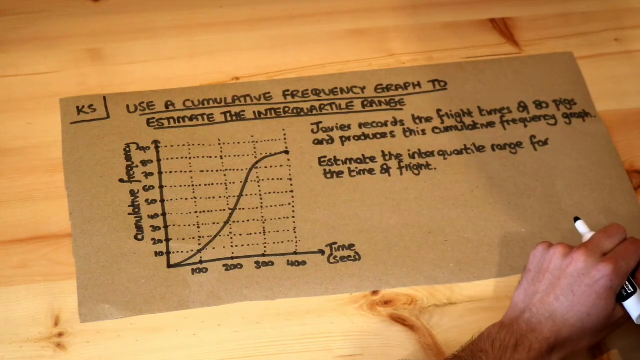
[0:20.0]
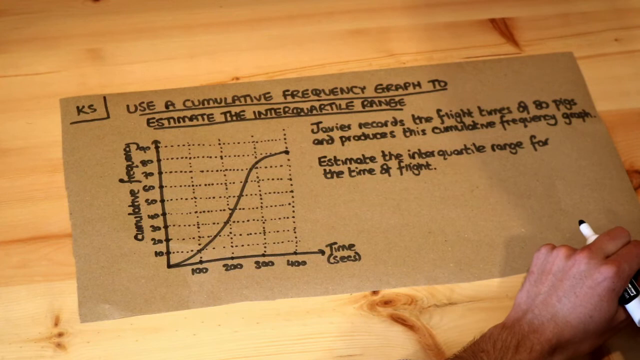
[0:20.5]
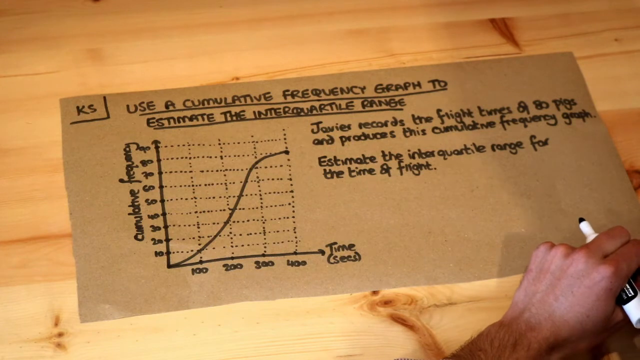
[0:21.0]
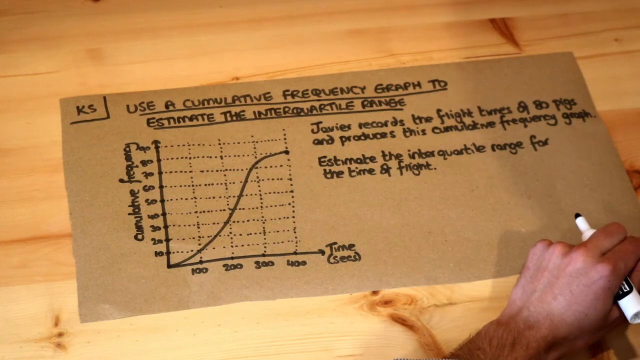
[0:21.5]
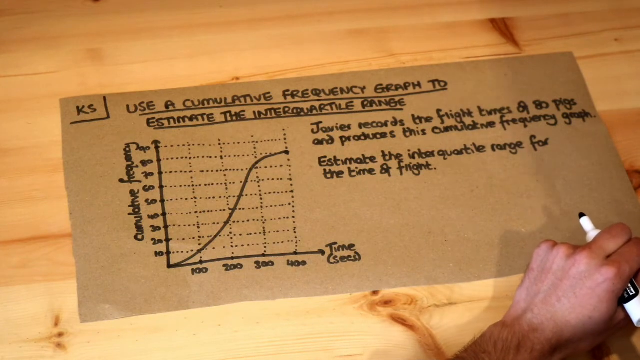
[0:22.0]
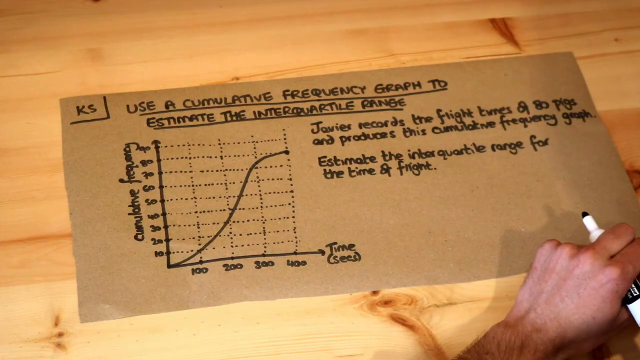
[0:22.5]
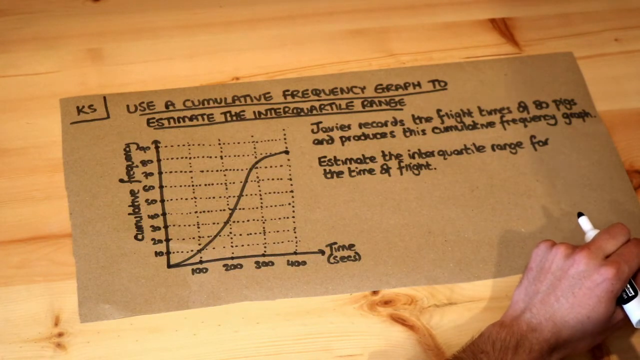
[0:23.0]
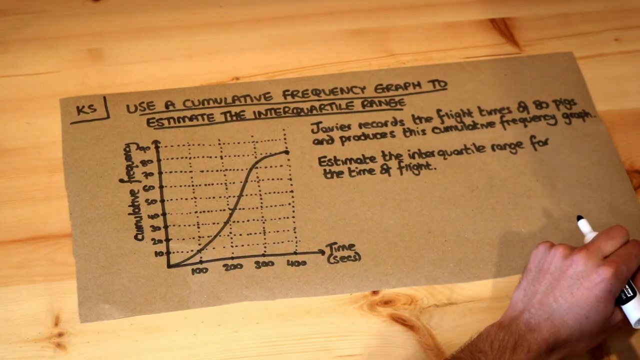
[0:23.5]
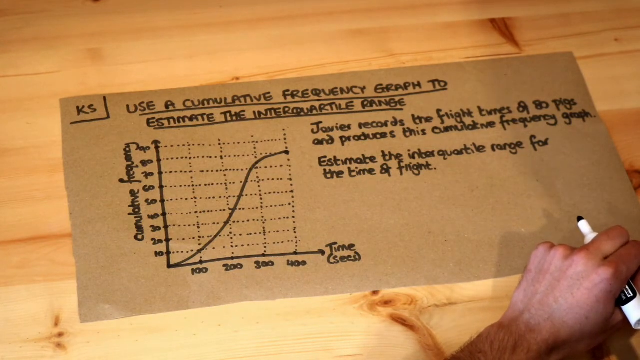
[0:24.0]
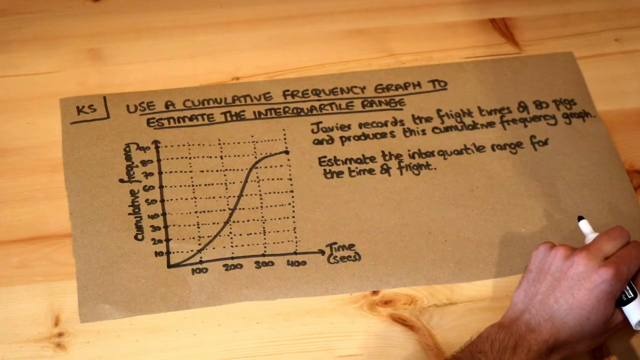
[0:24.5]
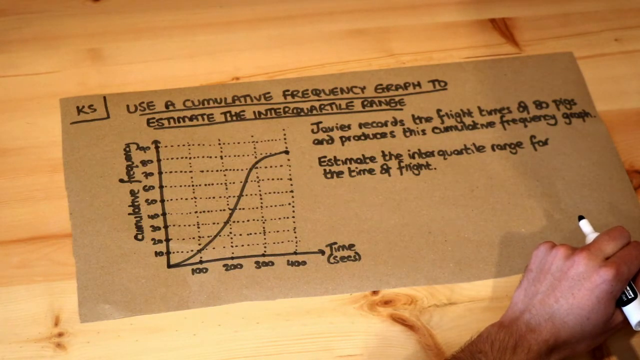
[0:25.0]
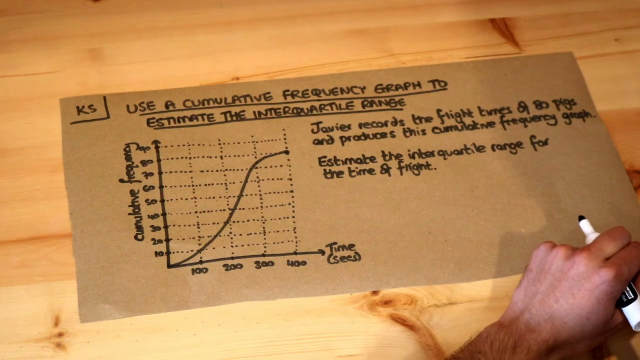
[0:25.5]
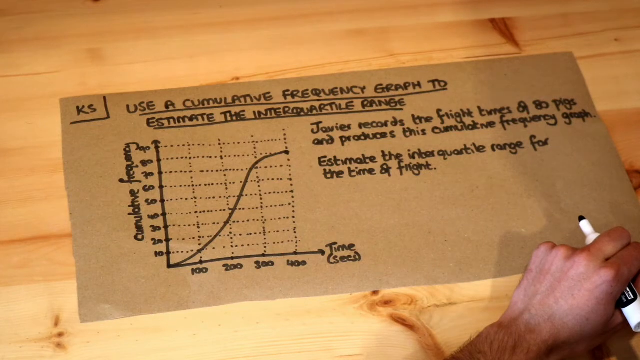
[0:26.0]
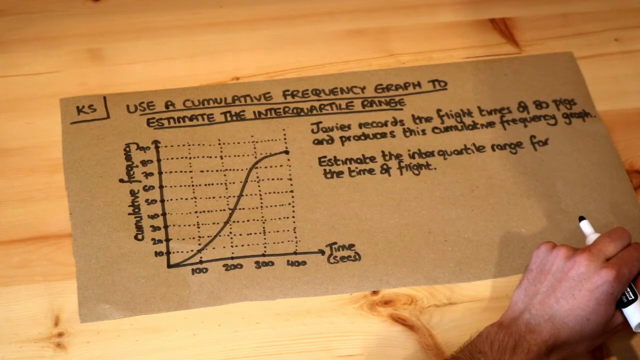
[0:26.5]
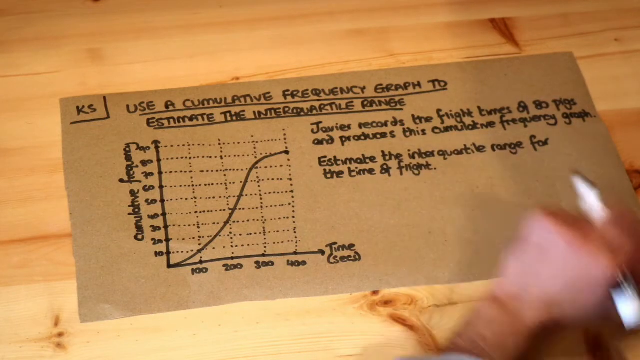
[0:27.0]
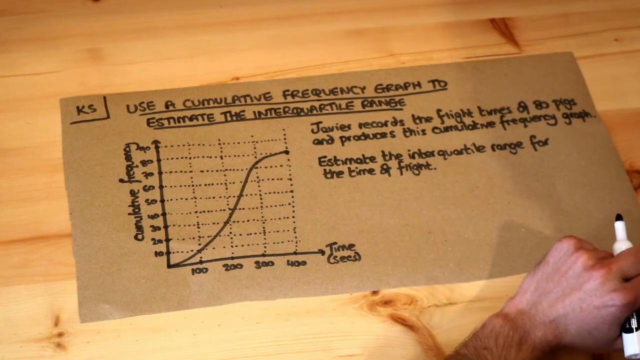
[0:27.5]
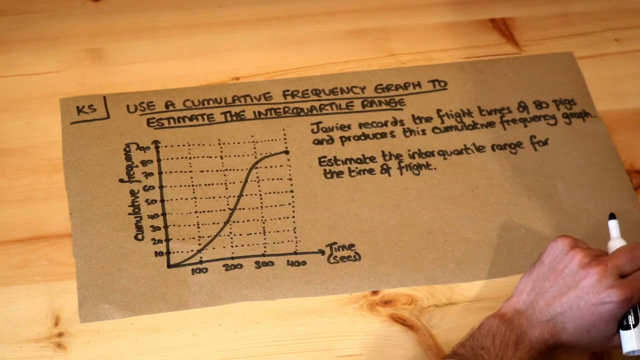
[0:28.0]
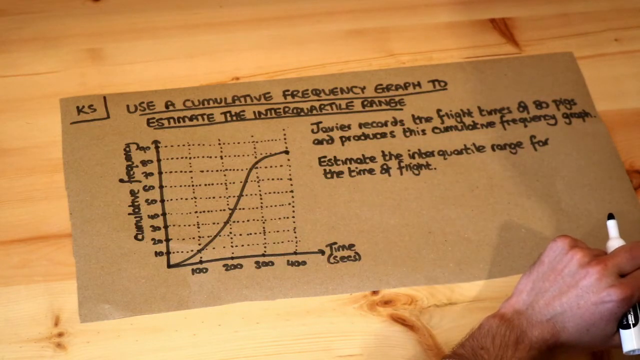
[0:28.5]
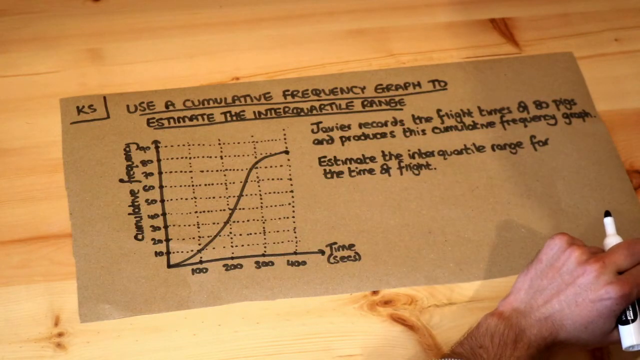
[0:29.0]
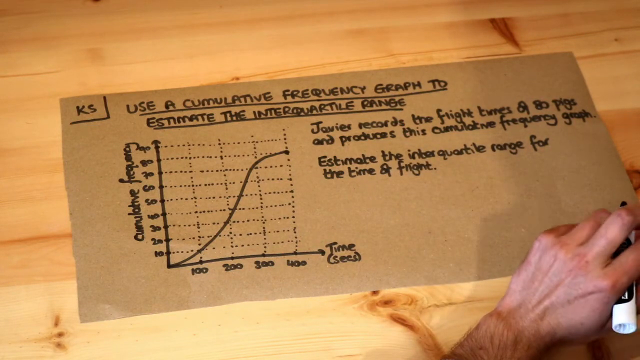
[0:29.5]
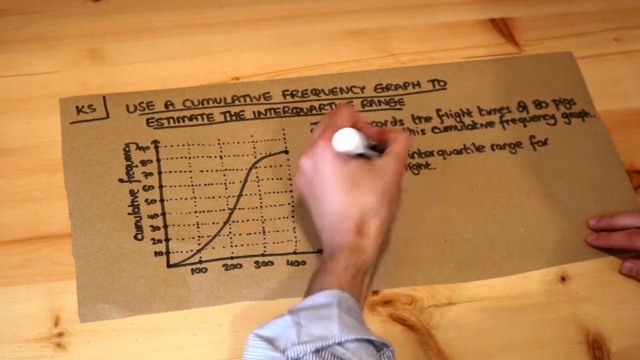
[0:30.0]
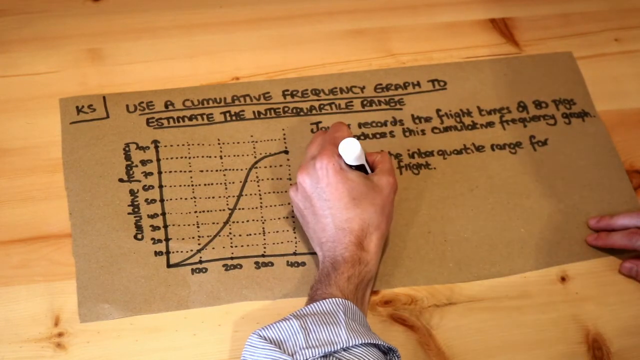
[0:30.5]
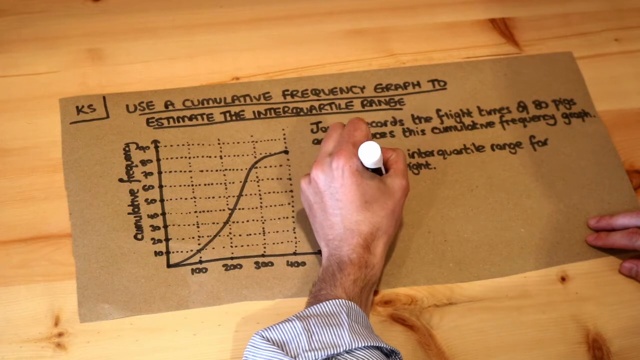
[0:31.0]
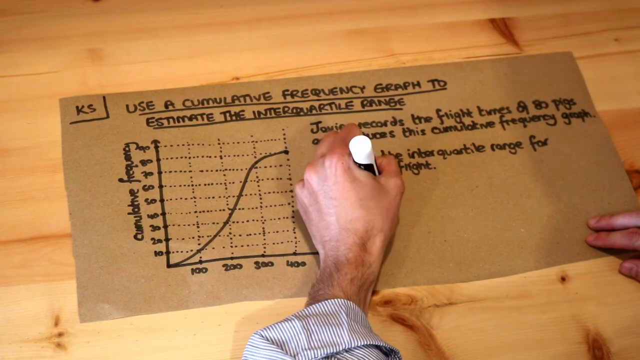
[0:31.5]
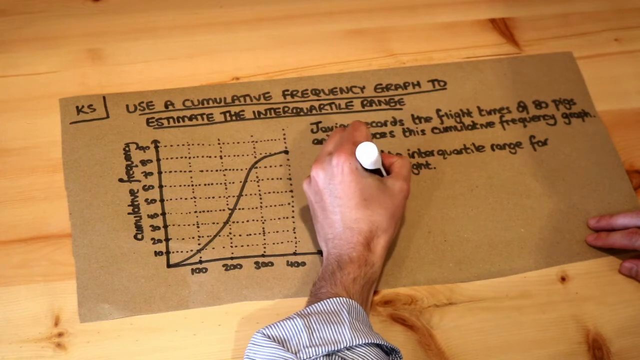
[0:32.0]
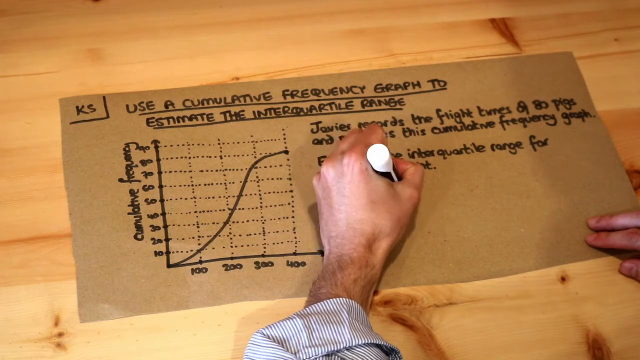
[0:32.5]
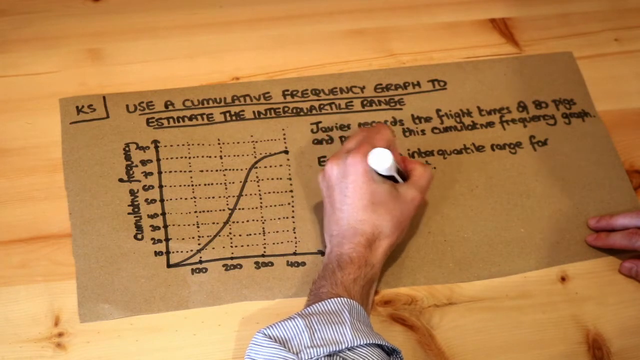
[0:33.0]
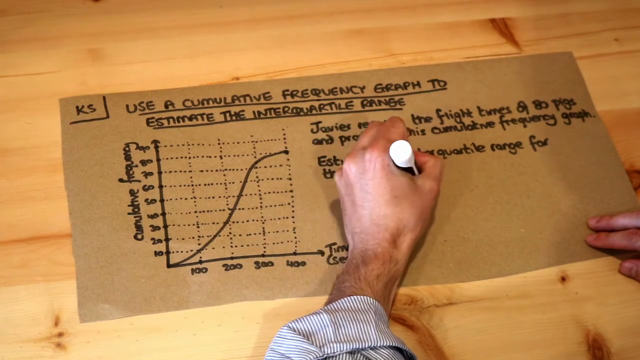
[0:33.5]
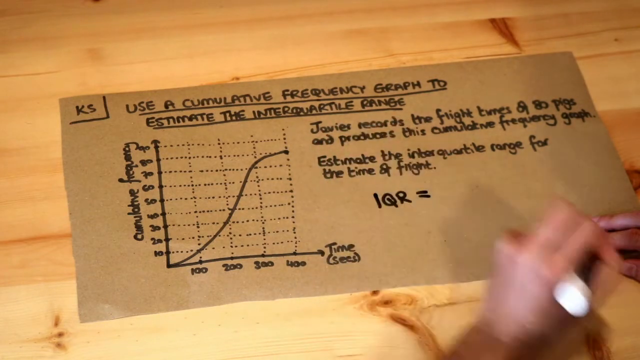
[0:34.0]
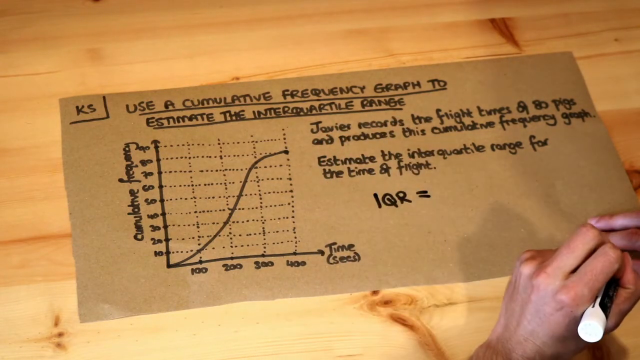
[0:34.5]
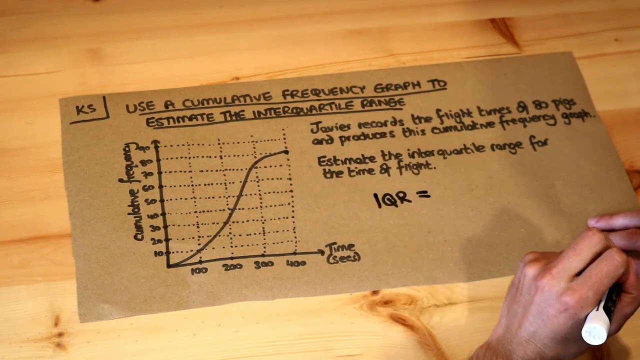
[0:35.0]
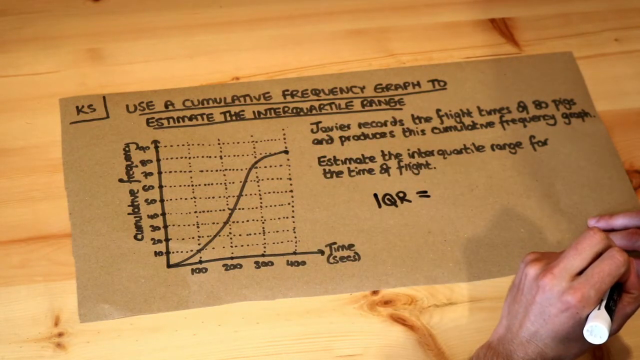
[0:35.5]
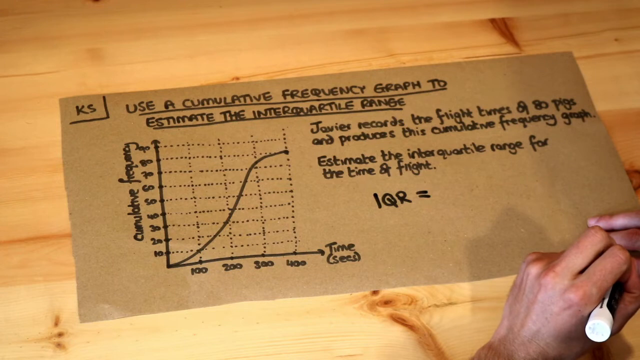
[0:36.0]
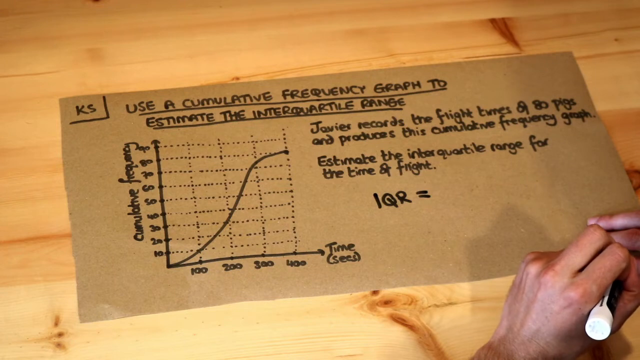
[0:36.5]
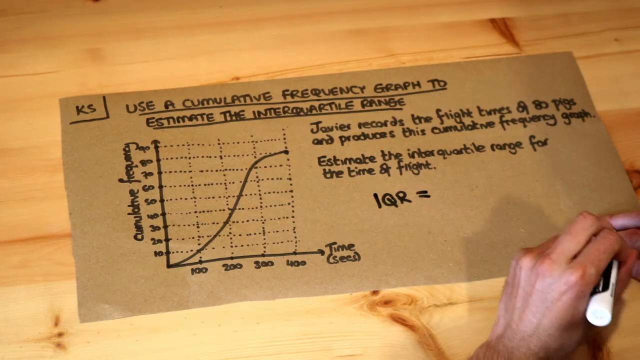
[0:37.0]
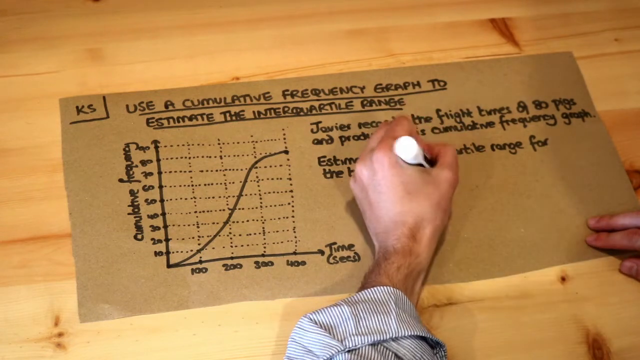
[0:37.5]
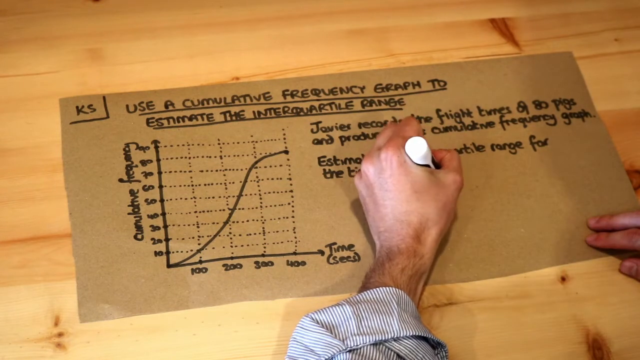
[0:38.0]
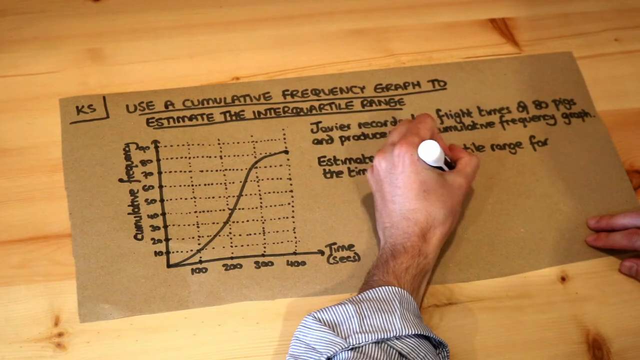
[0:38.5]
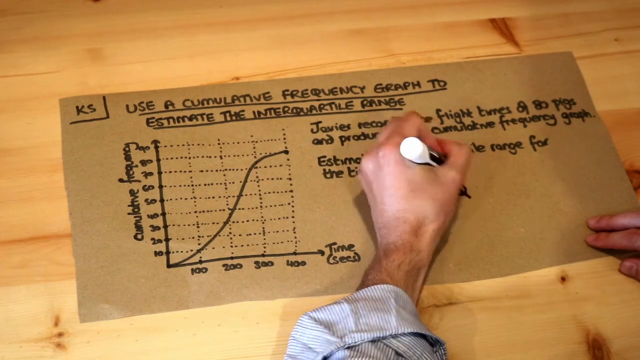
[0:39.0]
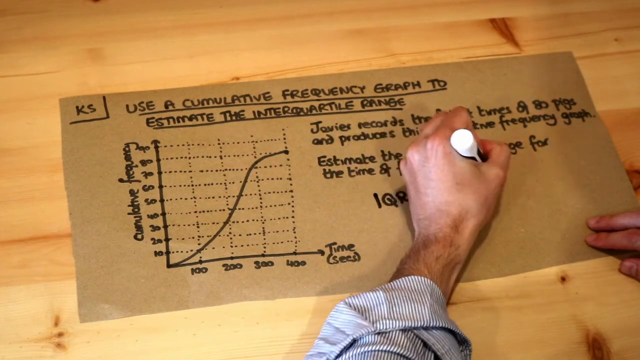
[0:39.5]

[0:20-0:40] A person is creating a graph and some information about it, writing on a piece of cardboard in black marker. Their hands are shown. They have drawn a curved graph measuring time, which is horizontal, versus cumulative frequency, written vertically. At the top it says "use a cumulative frequency graph to estimate the interquartile range," and a little information about it is written. The cap is off the pen, which is in the person's left hand. The hand moves a little and begins writing something on the board. The person is a man, with hair visible on his arms. He writes "1 QR equals," but what it equals is hidden by his hand. The cardboard is cut out, with raw edges on the sides, and it is laying on a piece of very light-coloured wood with natural stains and knots visible.